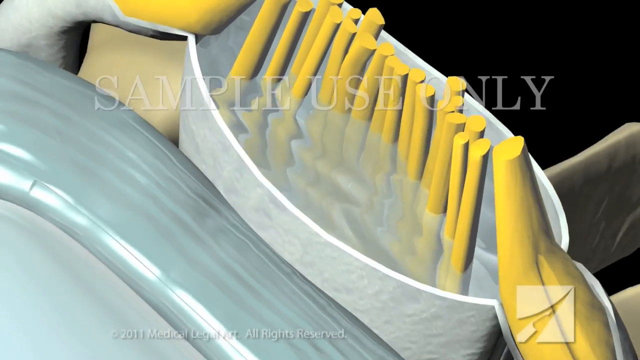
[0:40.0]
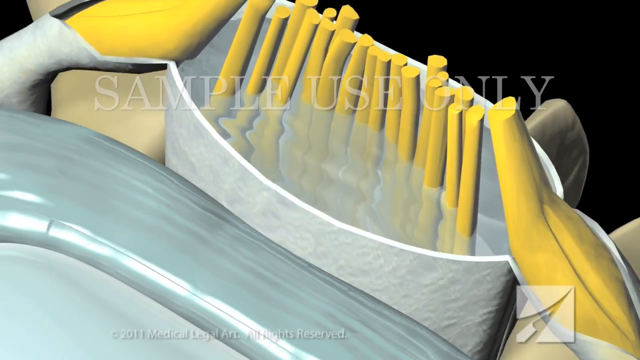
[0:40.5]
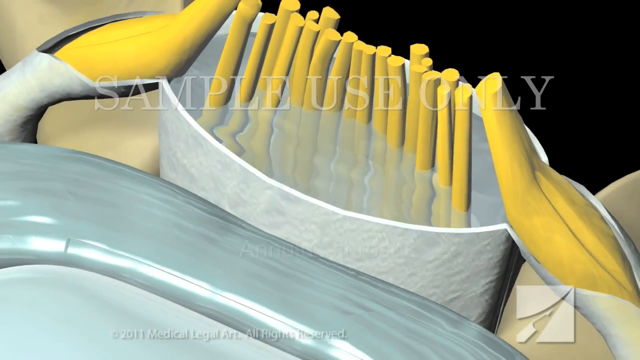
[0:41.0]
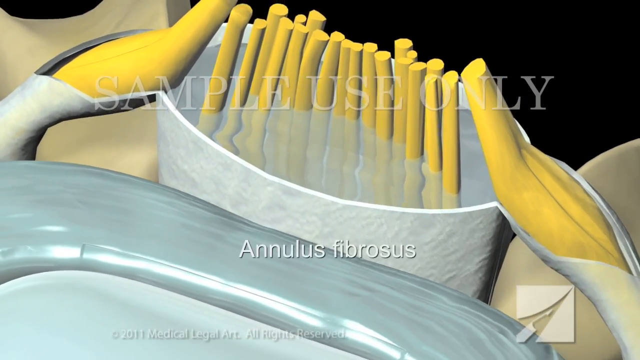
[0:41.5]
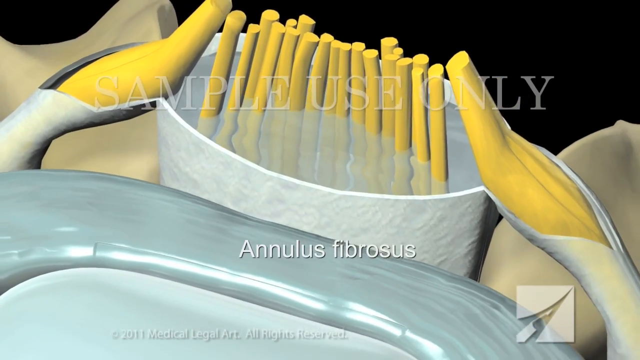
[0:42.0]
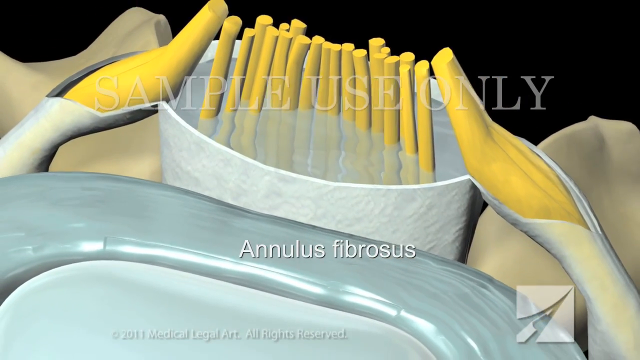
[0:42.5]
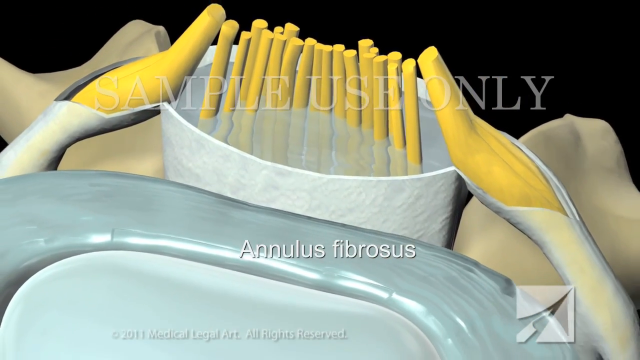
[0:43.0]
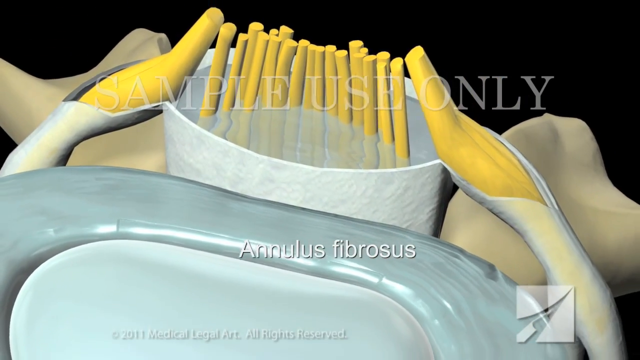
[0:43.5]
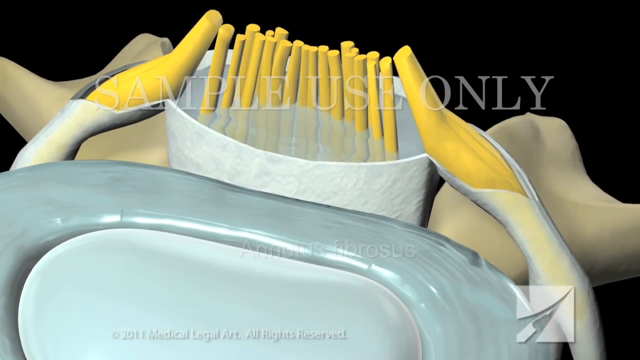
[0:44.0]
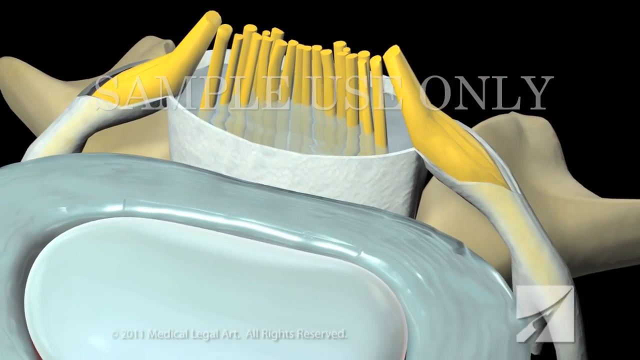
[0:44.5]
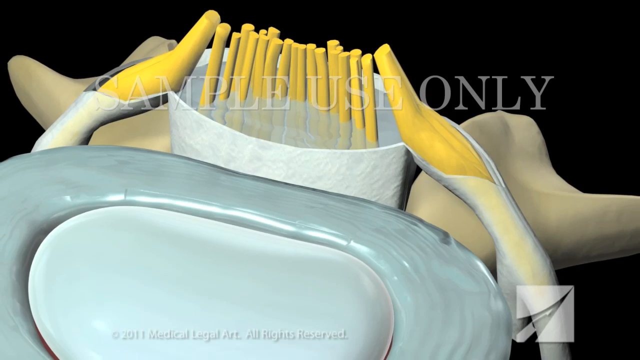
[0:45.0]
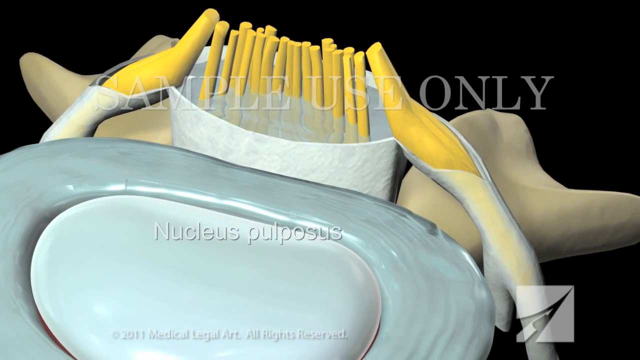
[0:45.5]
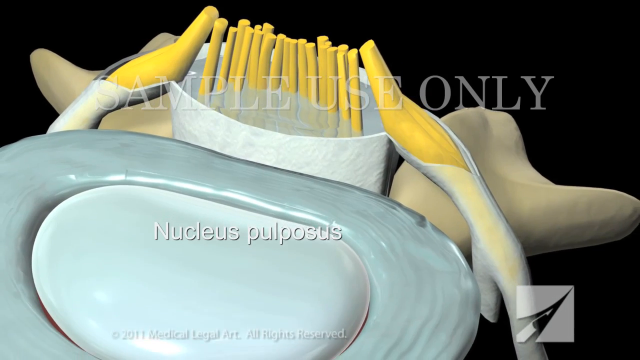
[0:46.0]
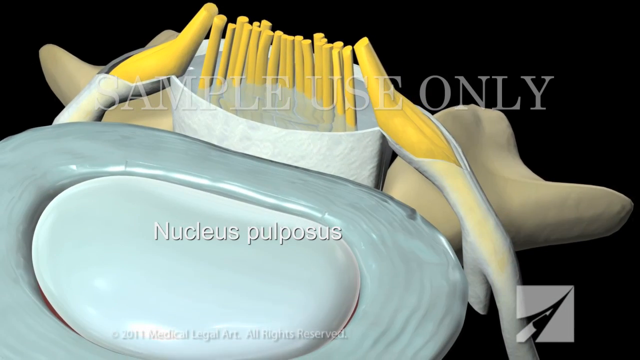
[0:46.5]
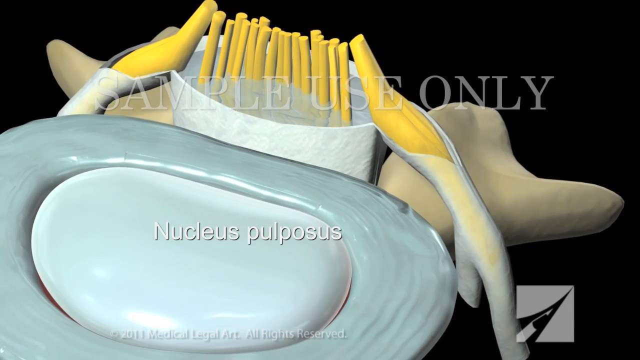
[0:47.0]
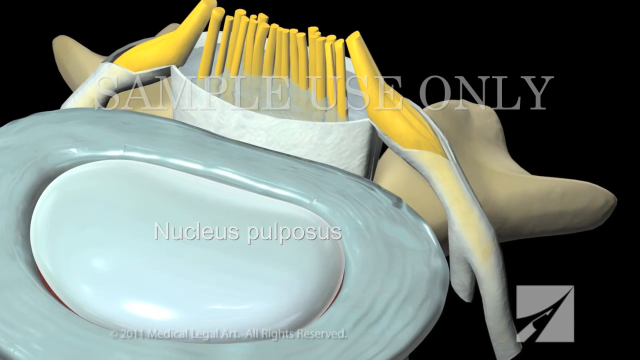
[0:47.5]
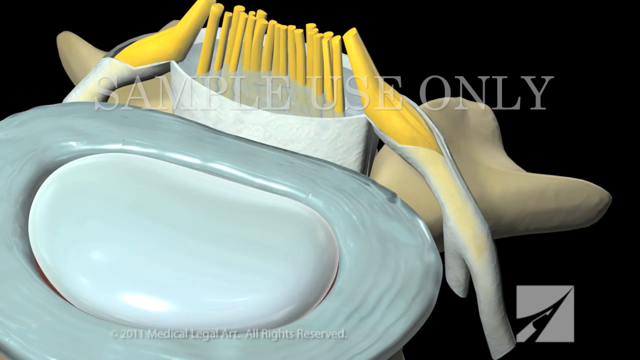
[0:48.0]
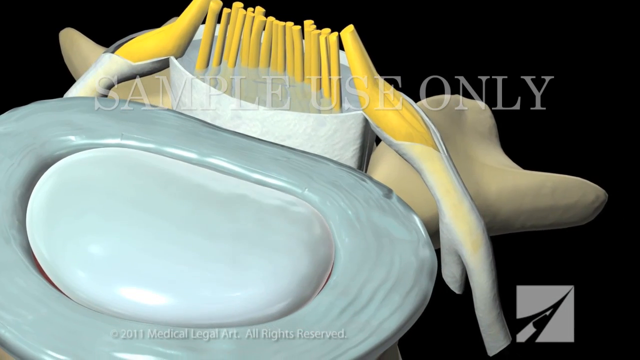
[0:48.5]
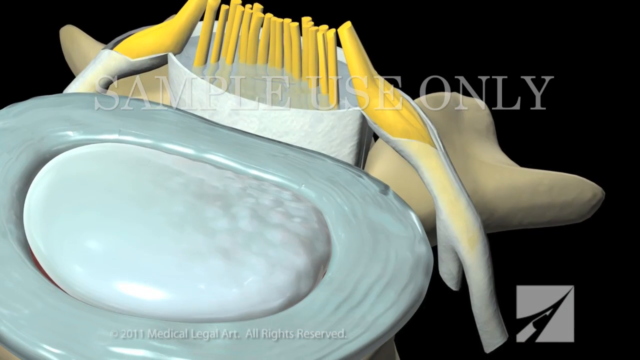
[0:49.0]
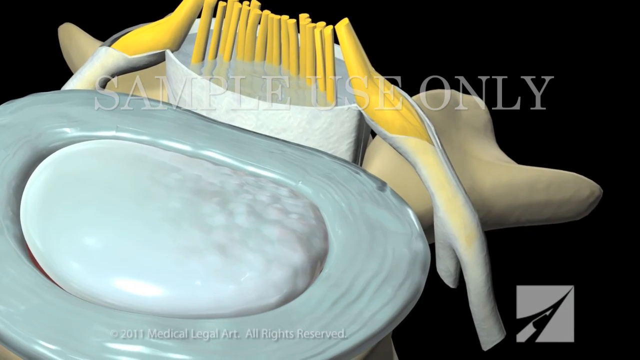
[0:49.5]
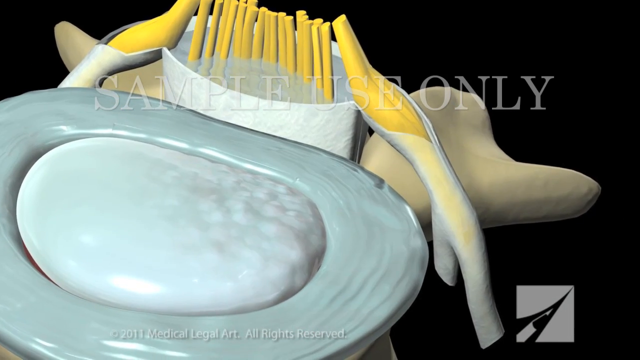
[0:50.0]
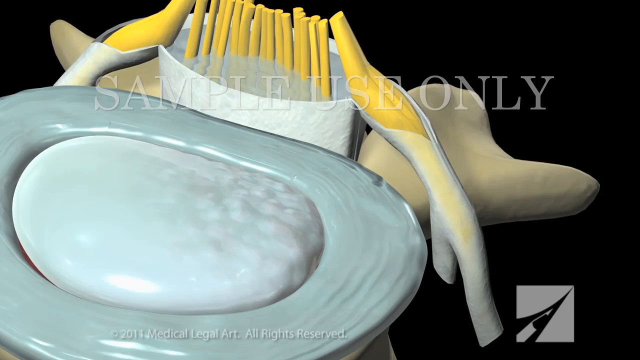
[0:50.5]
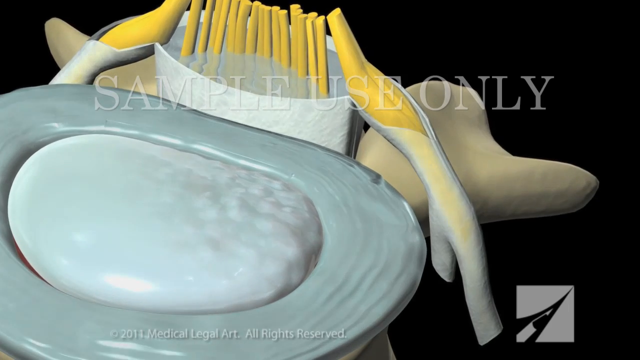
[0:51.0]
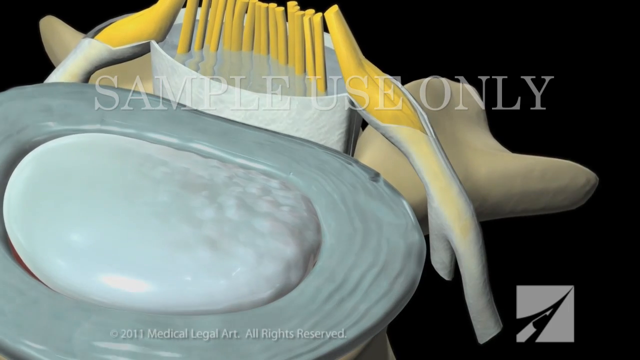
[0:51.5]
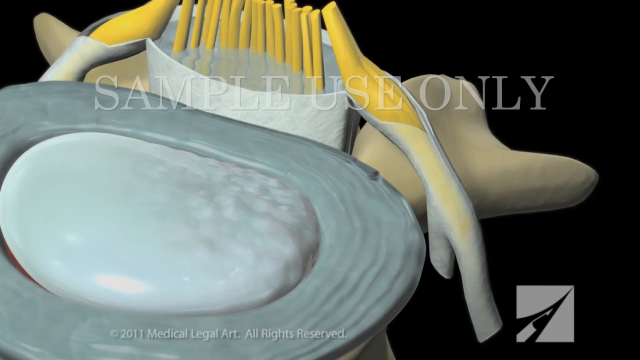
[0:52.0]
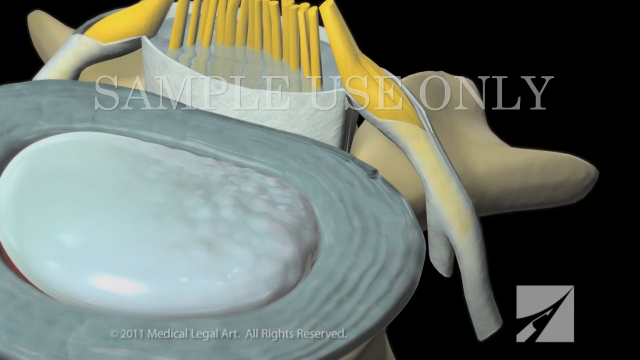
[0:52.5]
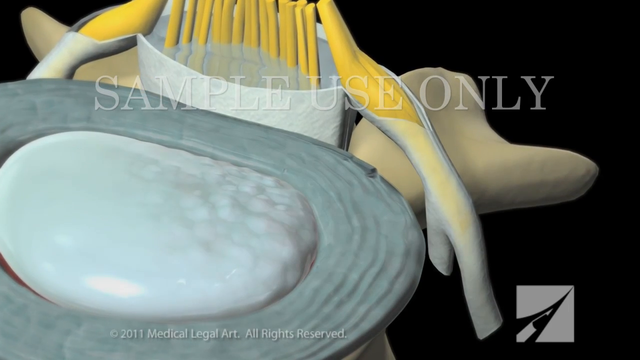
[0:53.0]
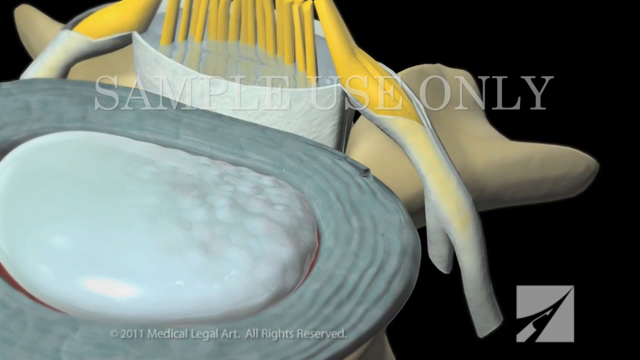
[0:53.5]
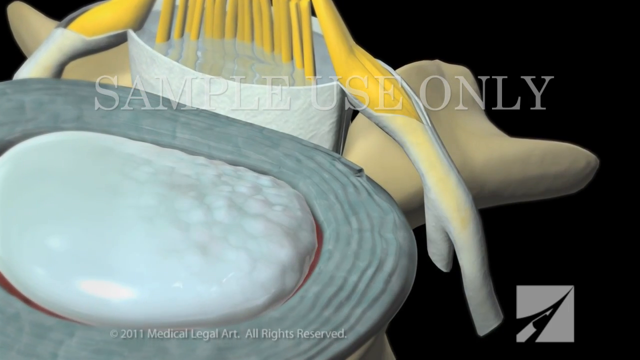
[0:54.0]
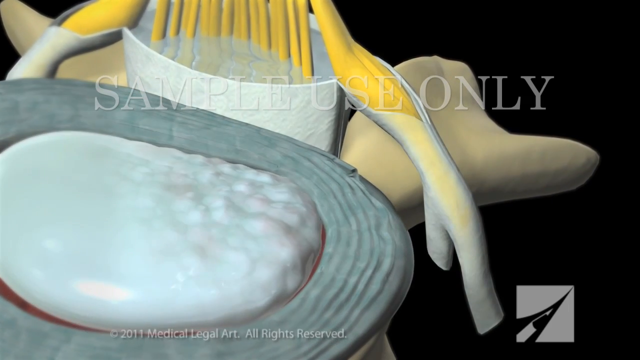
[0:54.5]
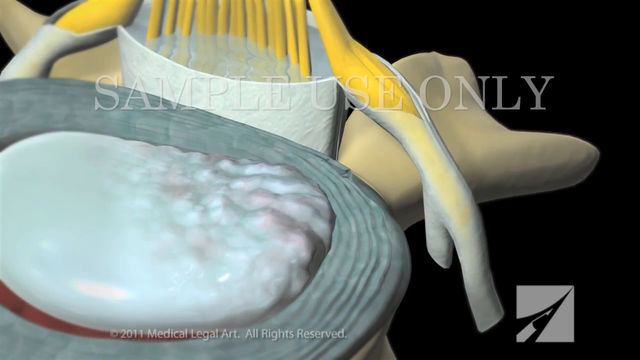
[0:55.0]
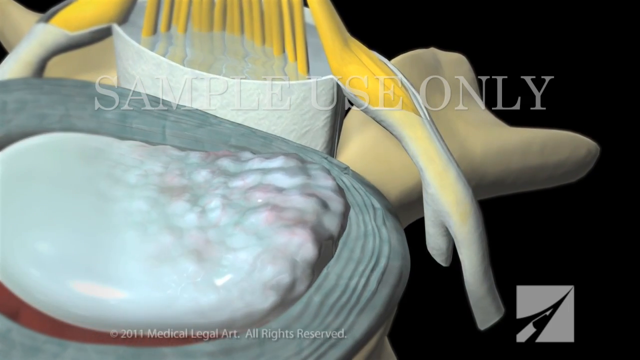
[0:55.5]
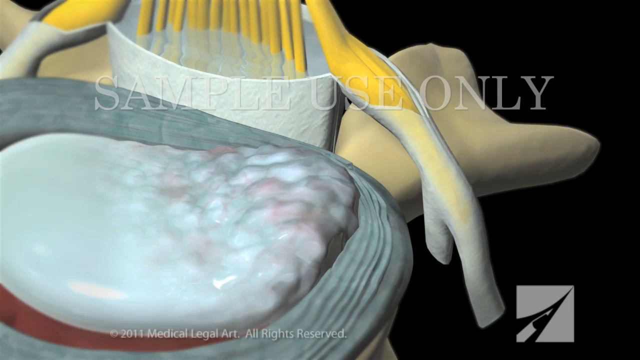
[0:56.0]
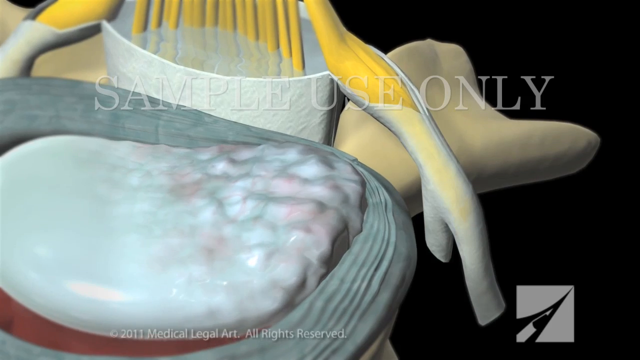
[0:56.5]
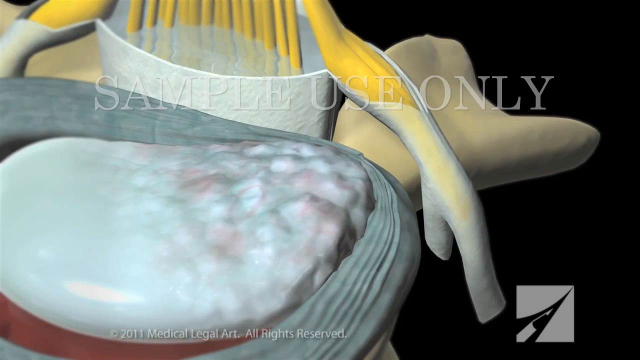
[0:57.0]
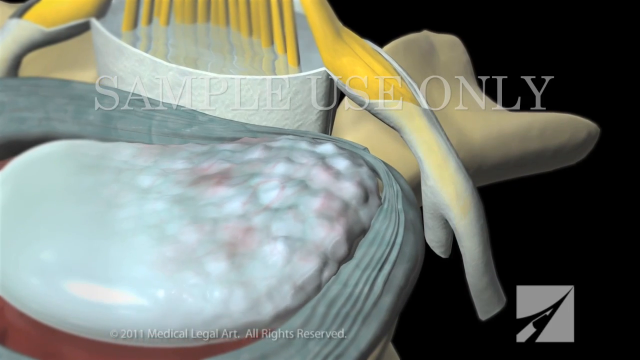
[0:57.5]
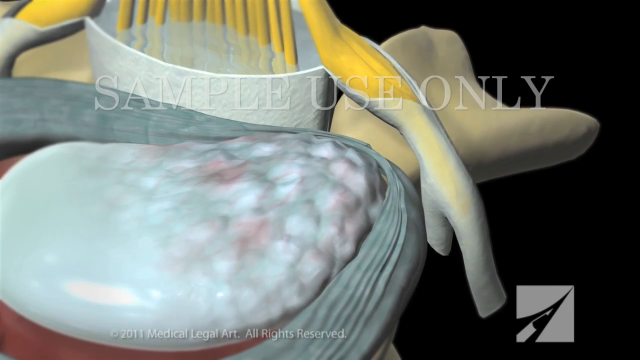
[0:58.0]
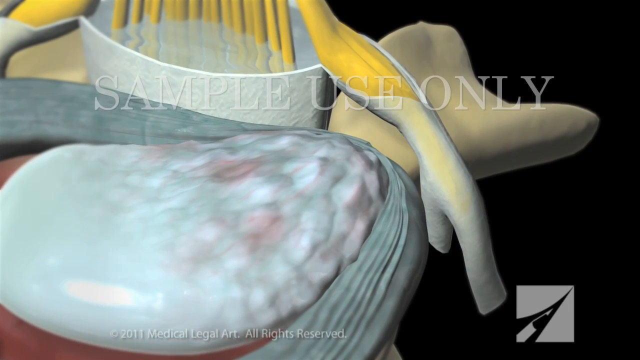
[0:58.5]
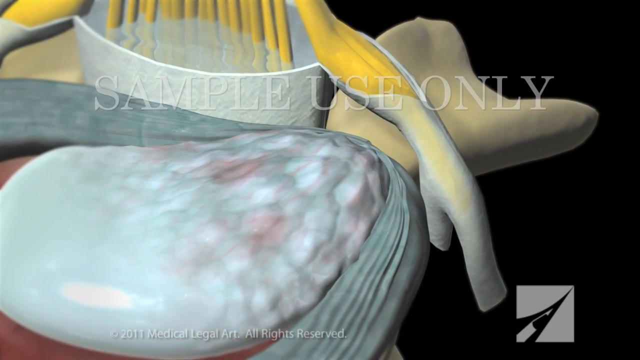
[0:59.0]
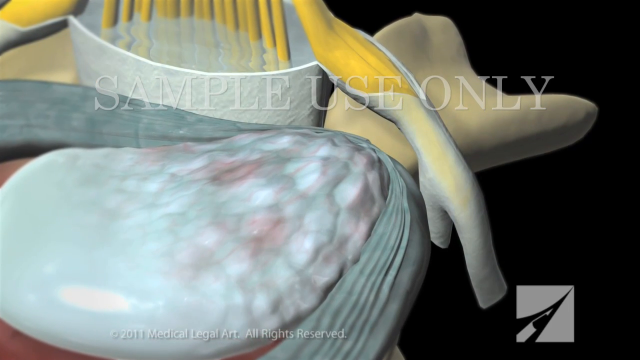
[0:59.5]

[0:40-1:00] An illustrated cross-section of a vertebra shows insulating tissue, and behind it a cluster of nerves running vertically up the spine. It has been cut open to reveal the nerves, which are yellow and vertical: they run up the center, with two larger ones running up the left and right sides. They are covered in a white sheath that has been peeled back somewhat to show their inner workings. A light gray watermark over the image reads "sample use only," and the background is dark black. The section of vertebra shown is a light gray, almost donut-like, rubber-band-looking rubbery piece with a white center, labeled in white text "nucleus pulposus." The view pans away as the nucleus pulposus begins to bulge out to the right and change color, showing some pinks and looking very bubbly. It looks like it is leaking out the right side, perhaps representing a herniated disc.